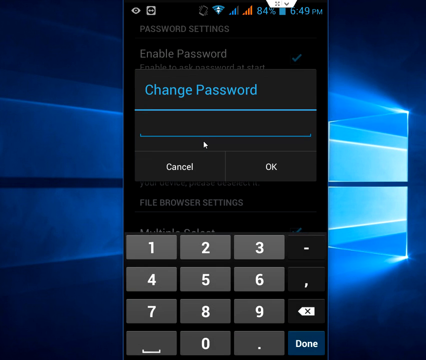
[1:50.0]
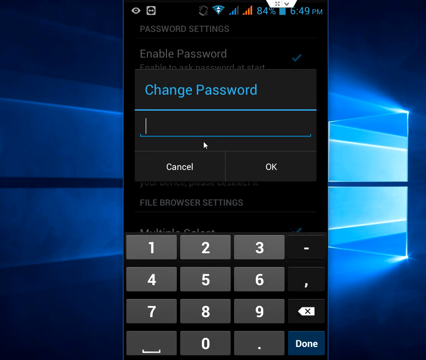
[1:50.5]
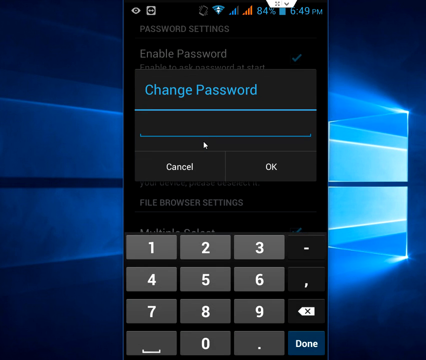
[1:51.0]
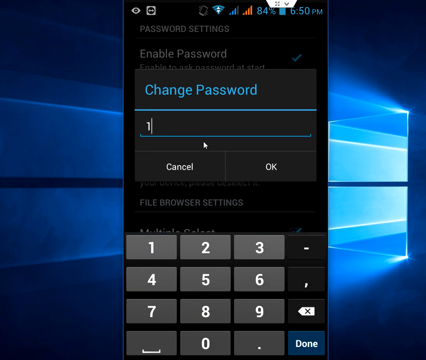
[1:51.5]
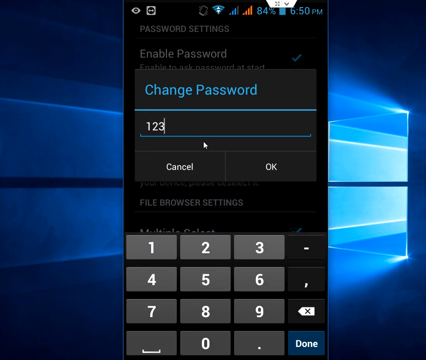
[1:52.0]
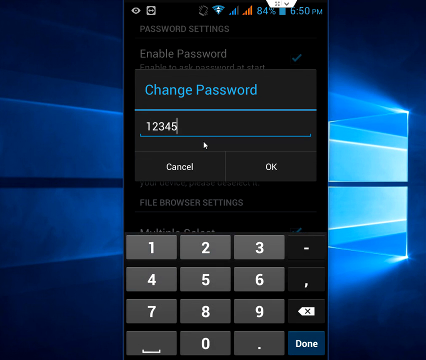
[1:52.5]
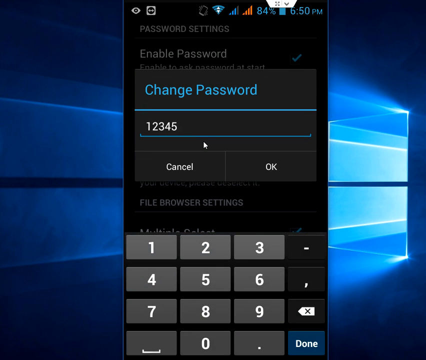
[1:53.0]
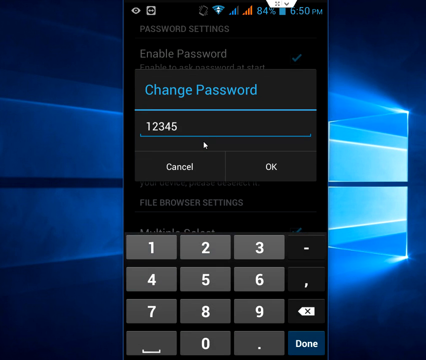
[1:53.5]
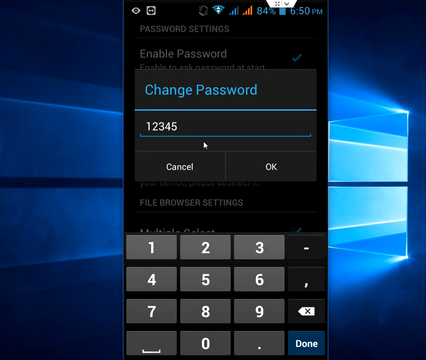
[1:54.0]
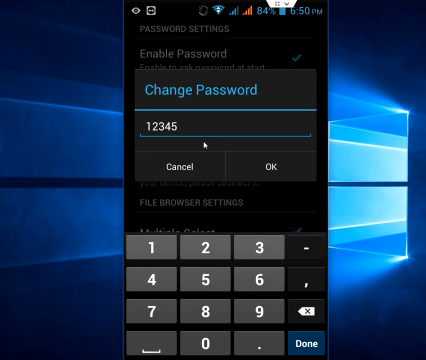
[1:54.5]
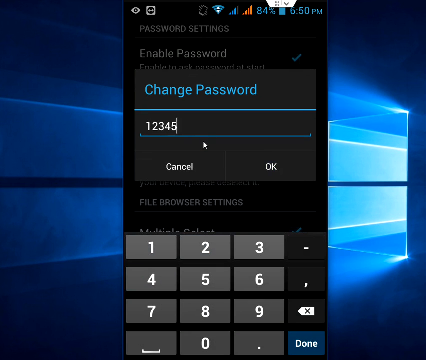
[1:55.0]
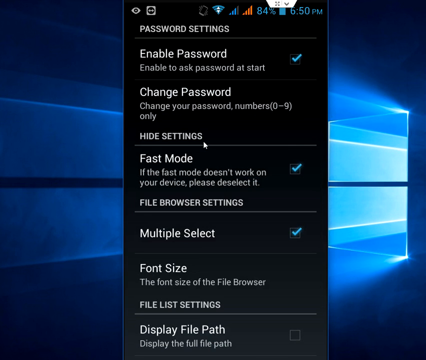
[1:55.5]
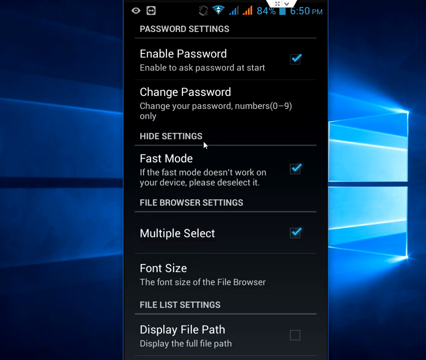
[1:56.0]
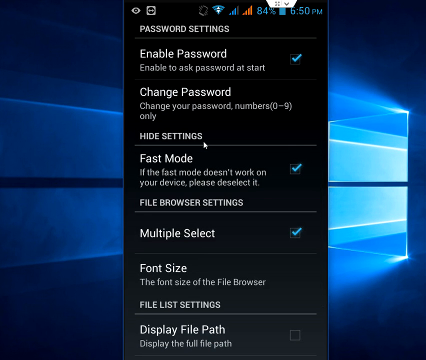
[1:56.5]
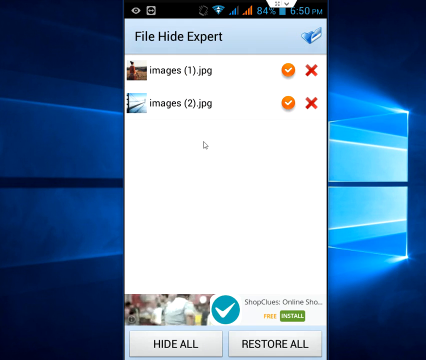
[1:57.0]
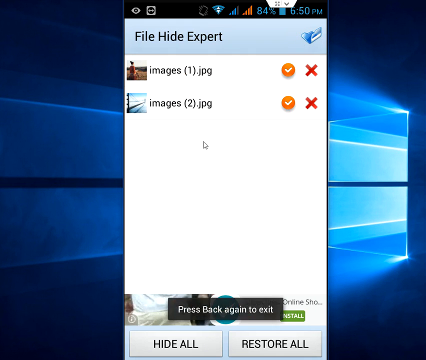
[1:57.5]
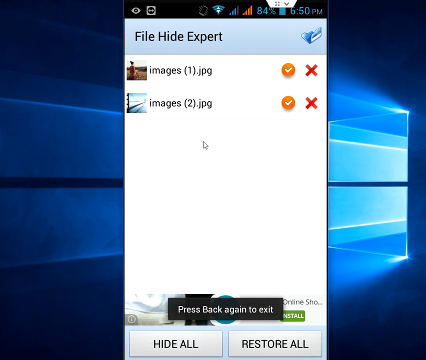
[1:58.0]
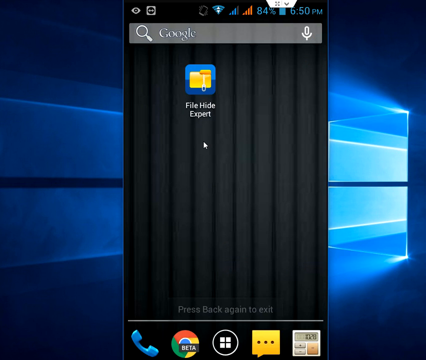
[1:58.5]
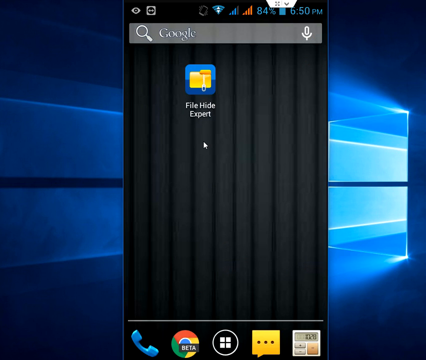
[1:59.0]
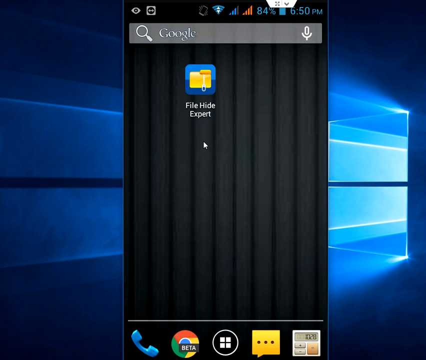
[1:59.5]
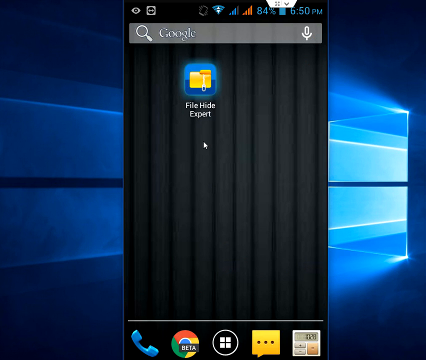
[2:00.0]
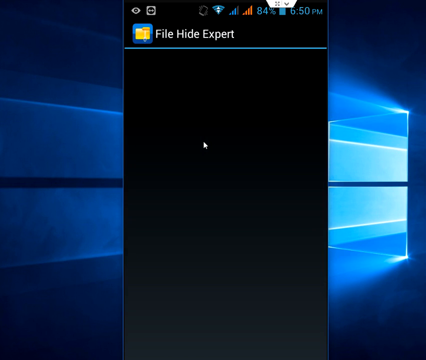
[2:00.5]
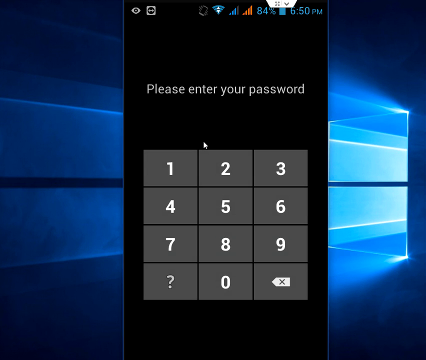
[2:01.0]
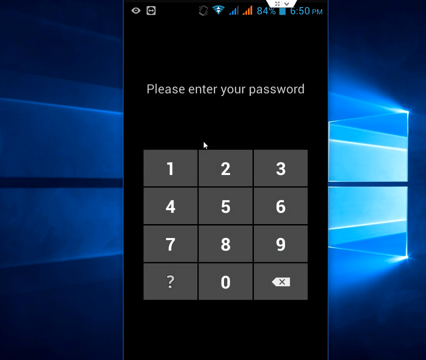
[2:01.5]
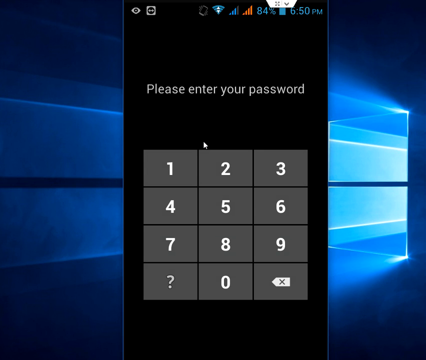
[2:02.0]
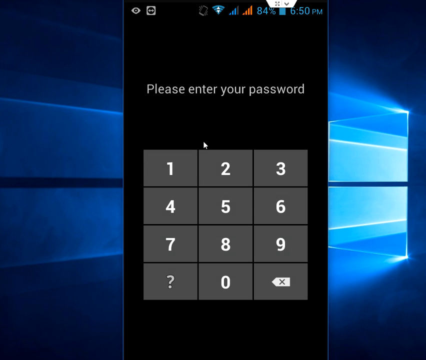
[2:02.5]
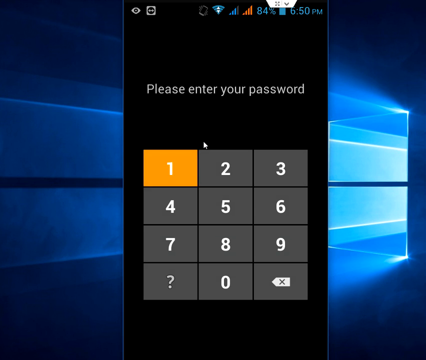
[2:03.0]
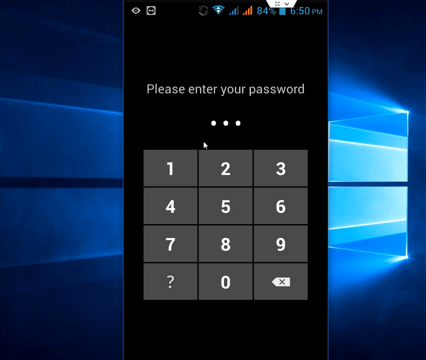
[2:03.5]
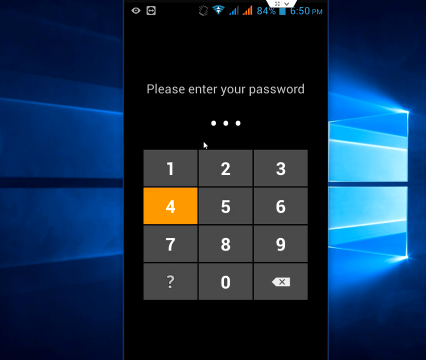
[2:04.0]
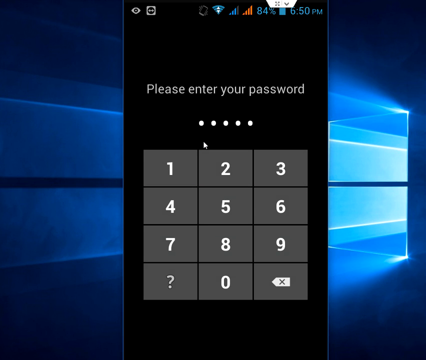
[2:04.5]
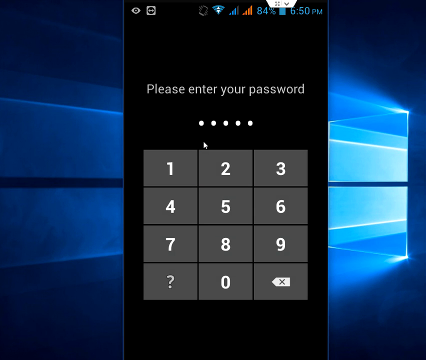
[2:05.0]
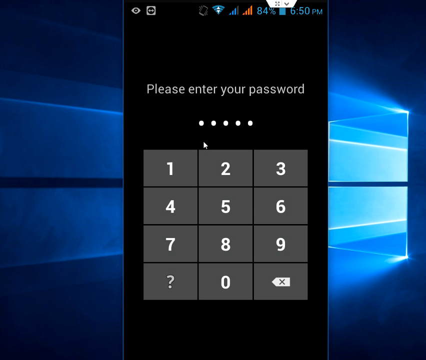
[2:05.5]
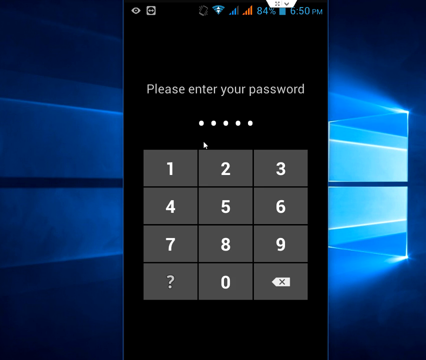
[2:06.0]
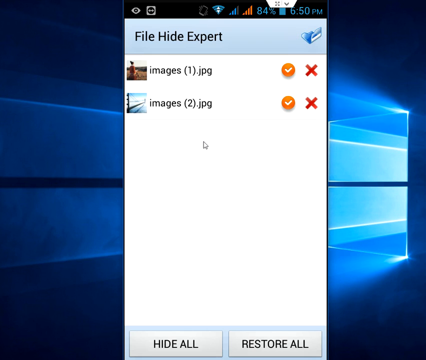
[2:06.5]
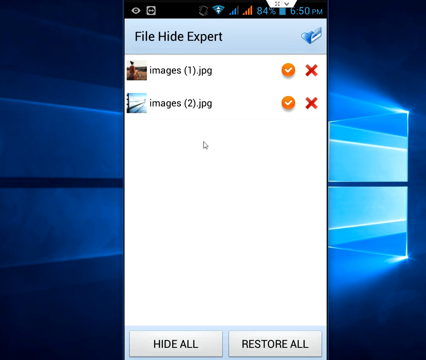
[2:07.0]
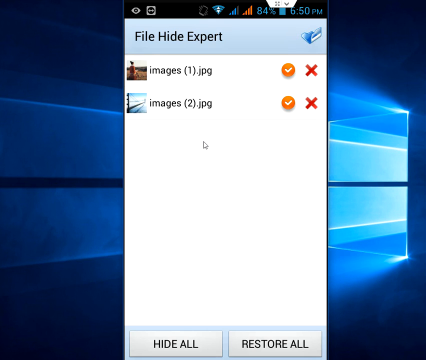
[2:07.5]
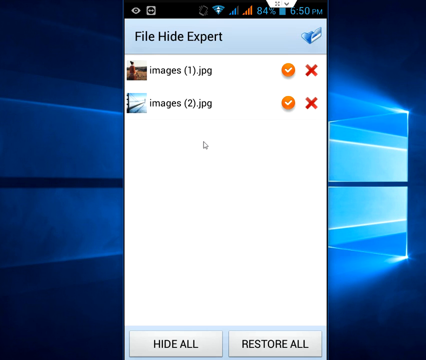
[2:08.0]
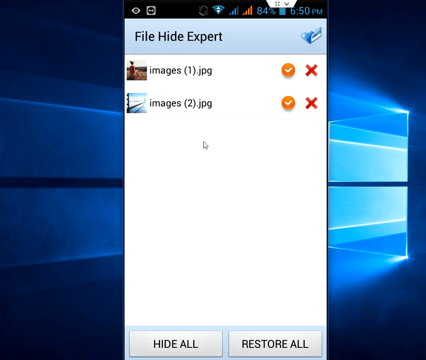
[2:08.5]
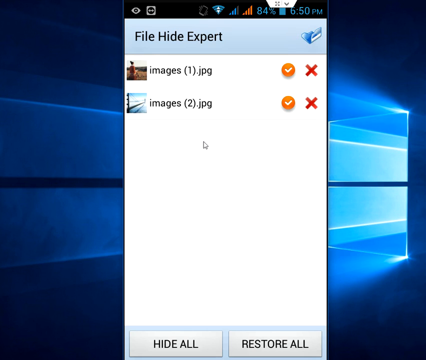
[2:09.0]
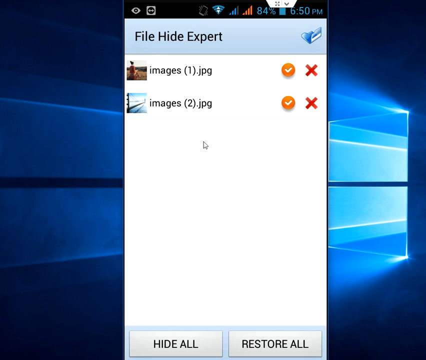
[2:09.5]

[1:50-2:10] In the change password pop-up, the user types 1, 2, 3, 4, 5 and selects the OK button with the cursor, returning to the password settings menu. The screen jumps back to File Hide Expert, showing the two images, and then to the main home screen with the black background and the File Hide Expert icon. The user clicks the icon with the mouse cursor, and the File Hide Expert screen briefly flashes before a screen appears reading "please enter your password" with a numerical dial pad in the center. The user selects 1, 2, 3, 4, 5 with the mouse, which opens the File Hide Expert folder with the two images.